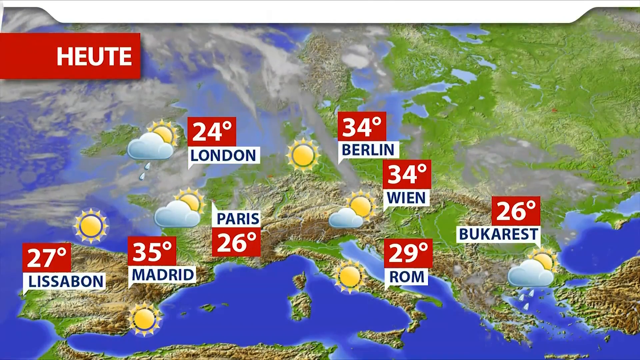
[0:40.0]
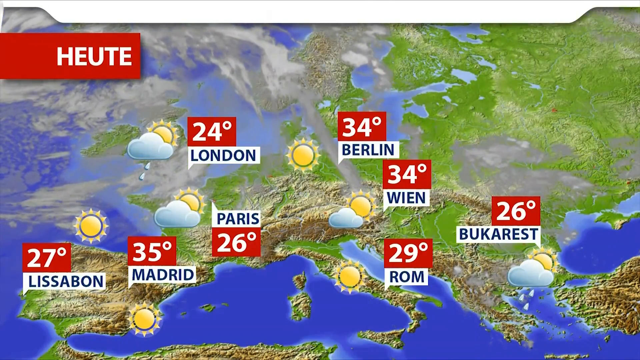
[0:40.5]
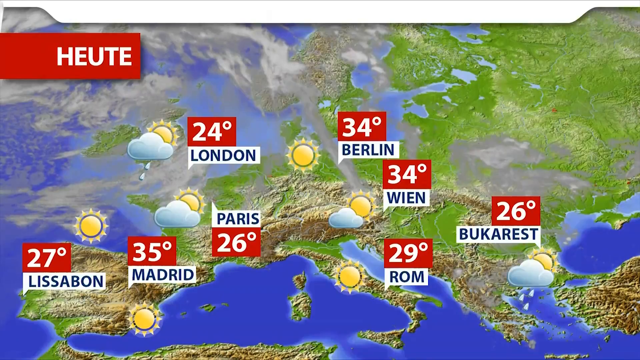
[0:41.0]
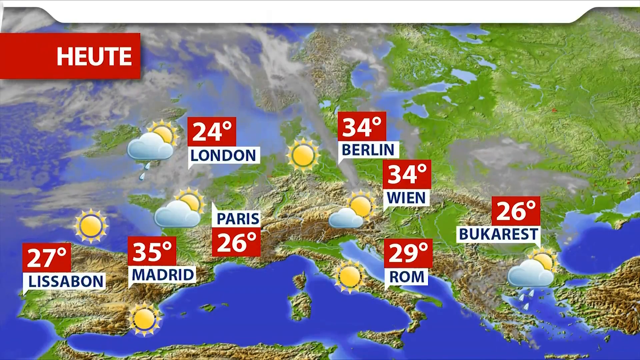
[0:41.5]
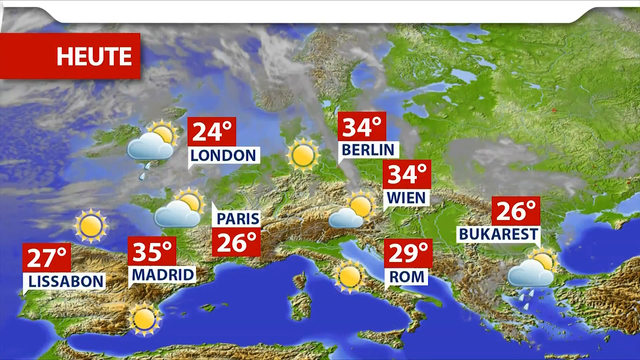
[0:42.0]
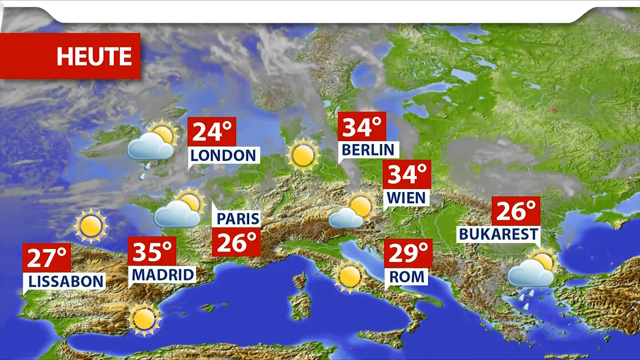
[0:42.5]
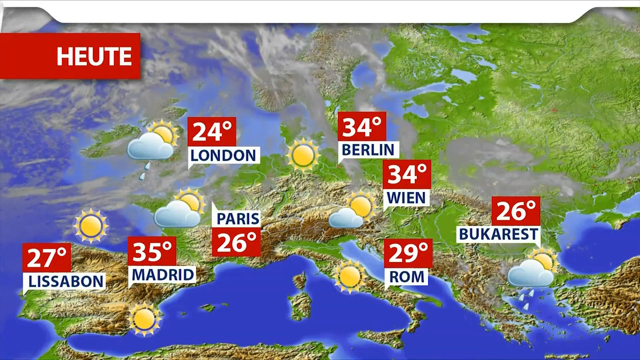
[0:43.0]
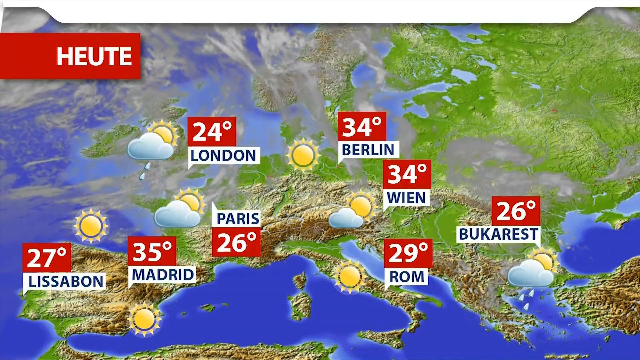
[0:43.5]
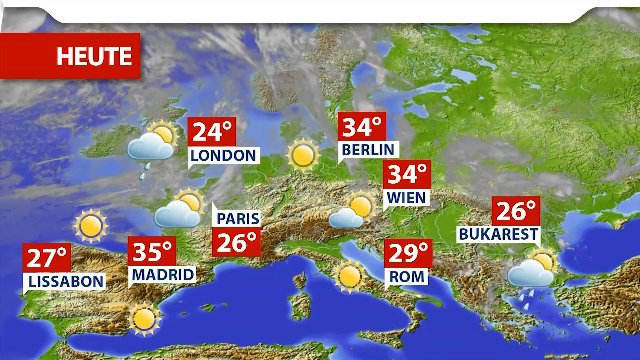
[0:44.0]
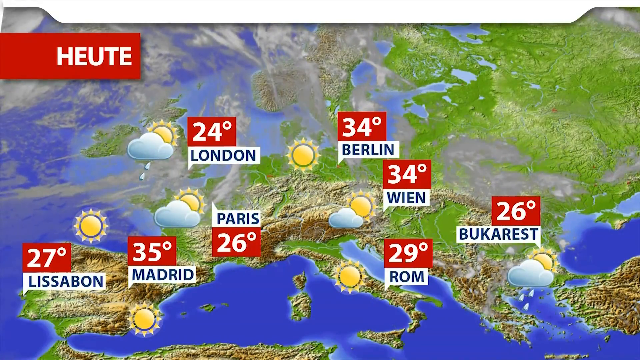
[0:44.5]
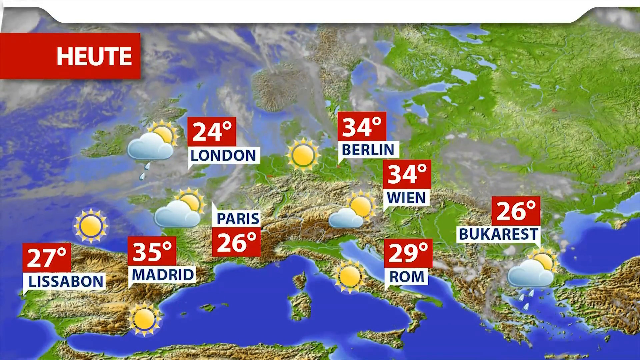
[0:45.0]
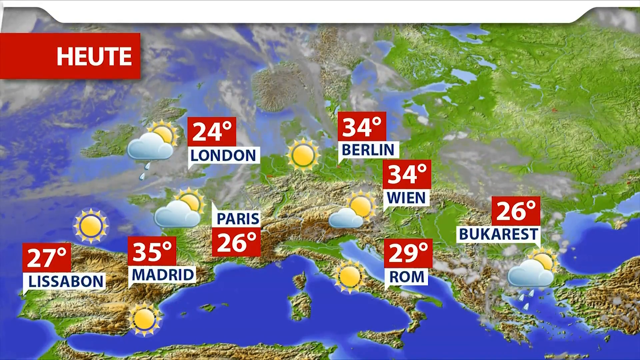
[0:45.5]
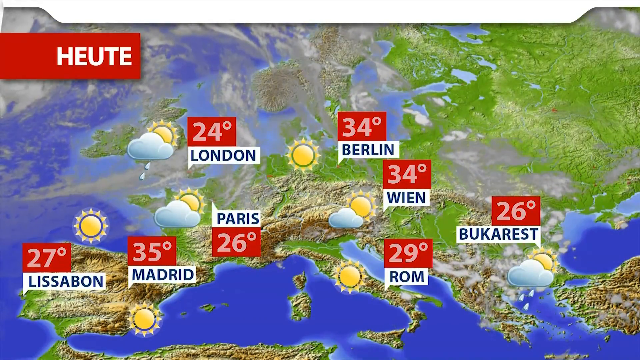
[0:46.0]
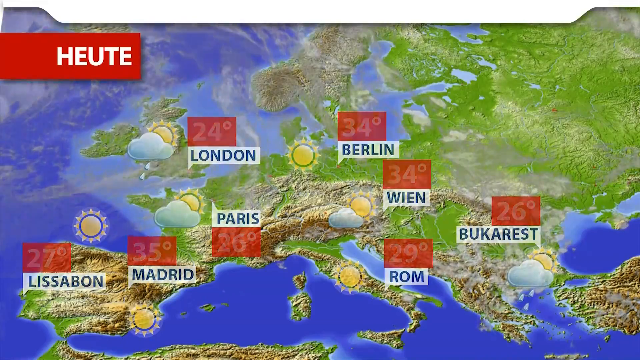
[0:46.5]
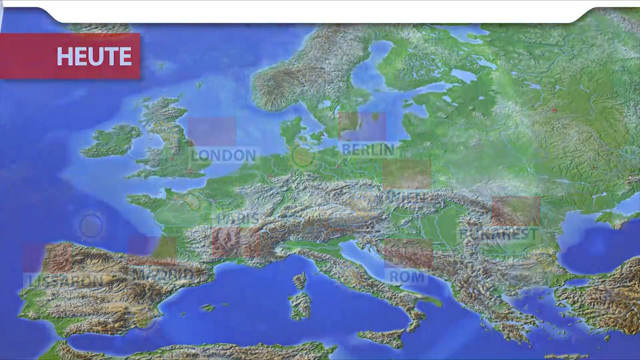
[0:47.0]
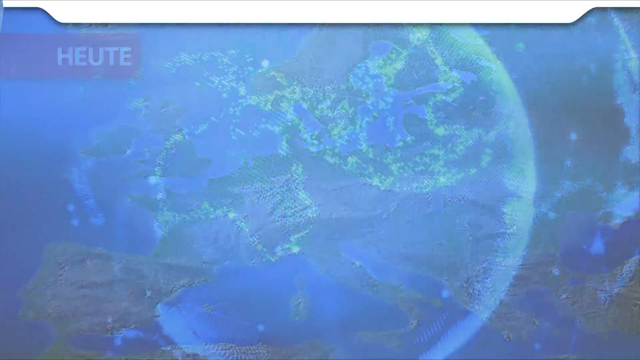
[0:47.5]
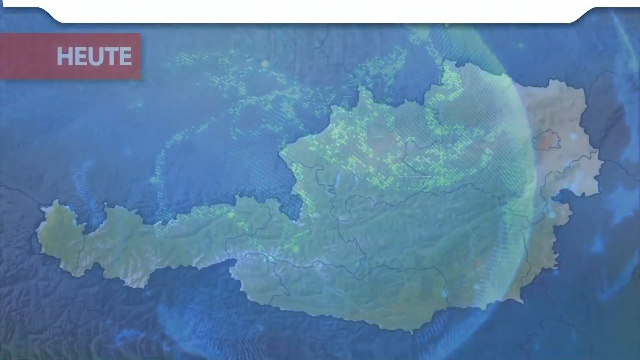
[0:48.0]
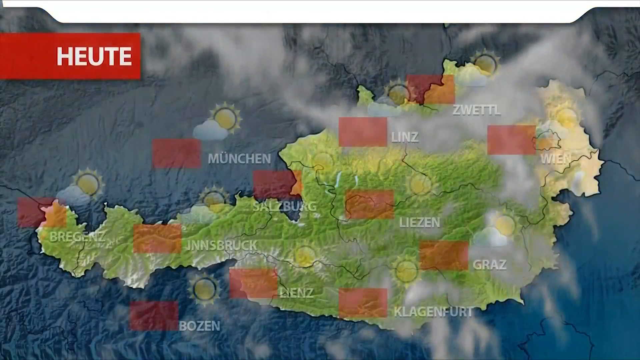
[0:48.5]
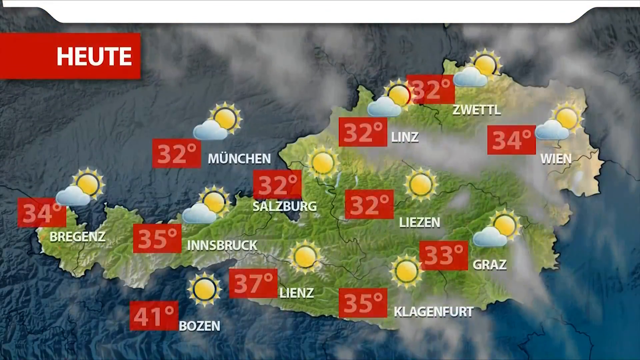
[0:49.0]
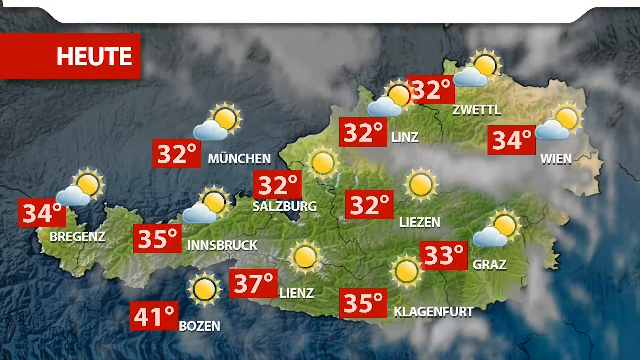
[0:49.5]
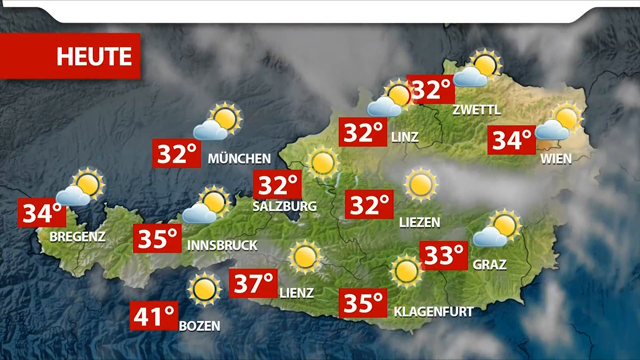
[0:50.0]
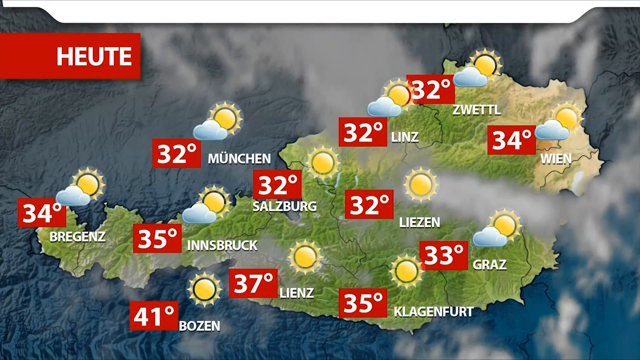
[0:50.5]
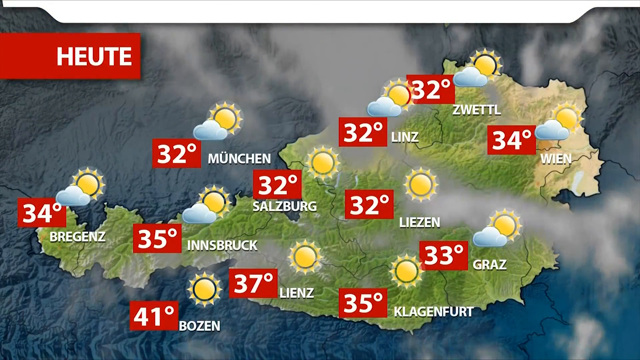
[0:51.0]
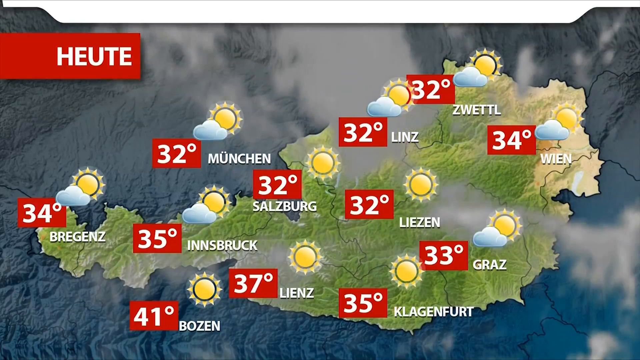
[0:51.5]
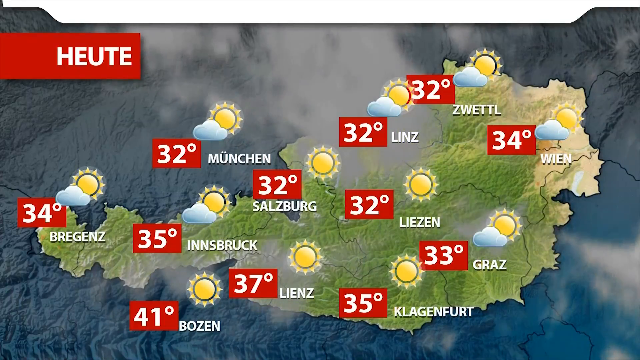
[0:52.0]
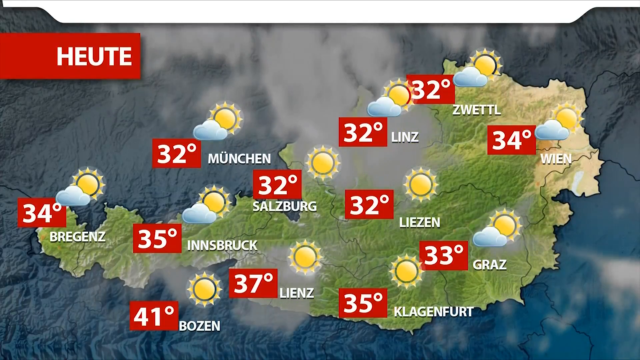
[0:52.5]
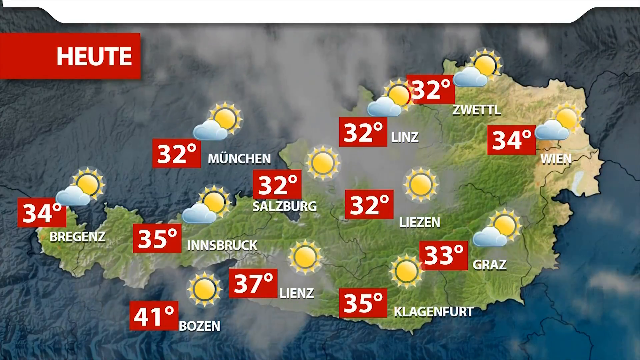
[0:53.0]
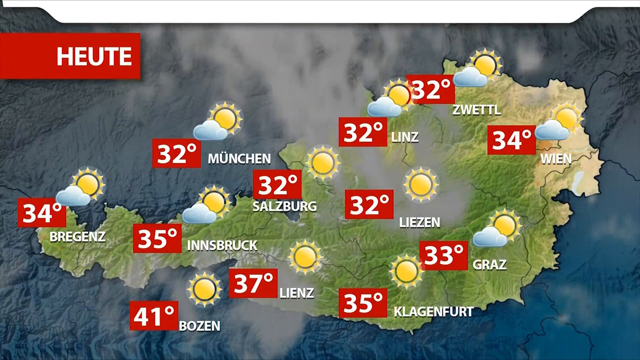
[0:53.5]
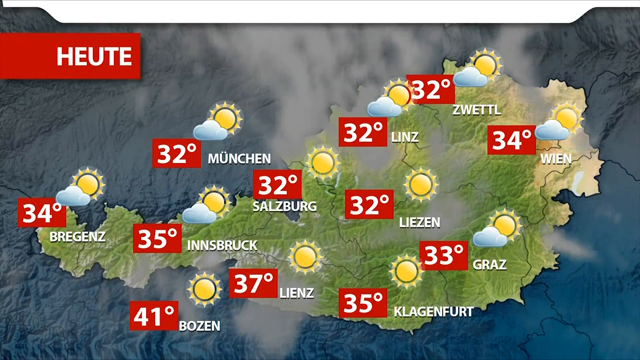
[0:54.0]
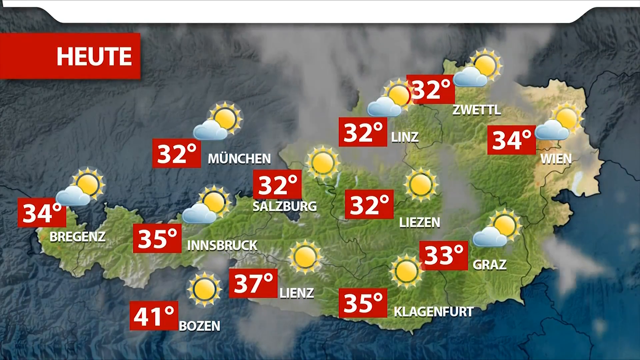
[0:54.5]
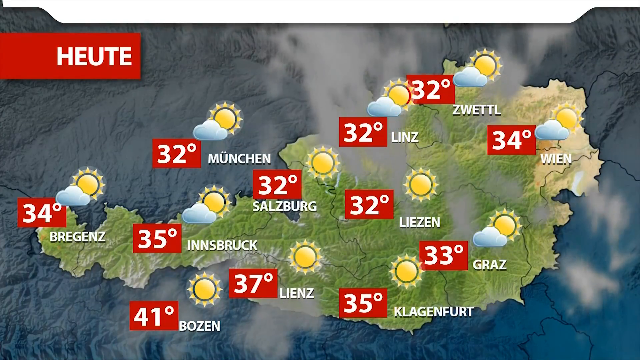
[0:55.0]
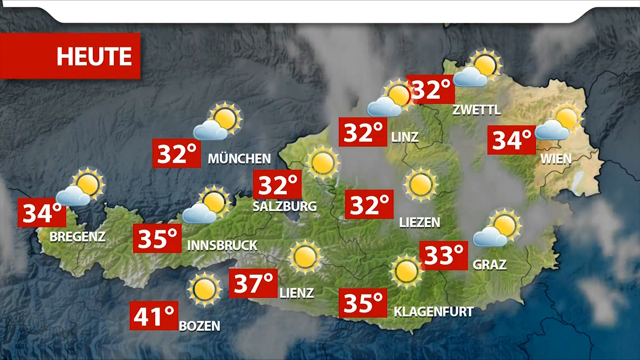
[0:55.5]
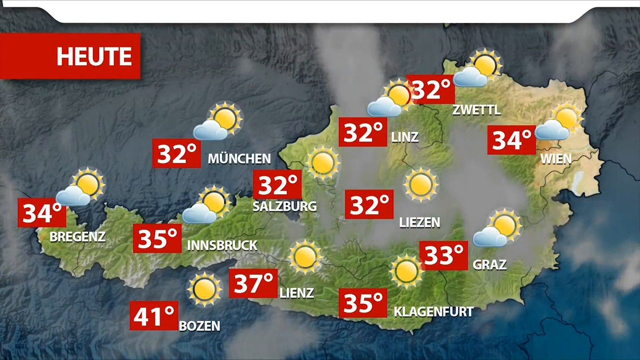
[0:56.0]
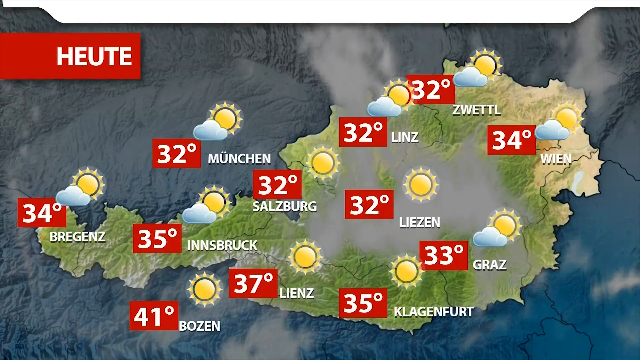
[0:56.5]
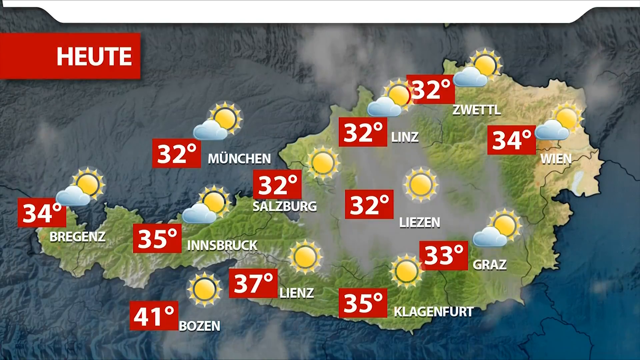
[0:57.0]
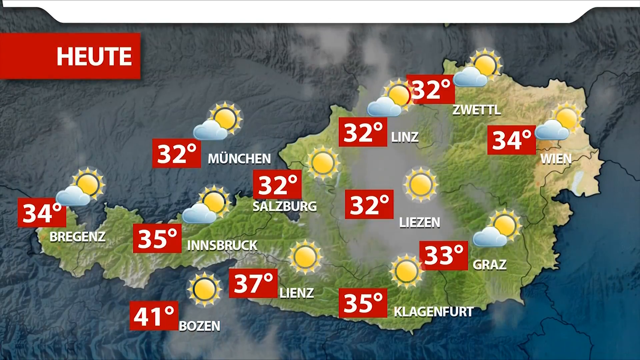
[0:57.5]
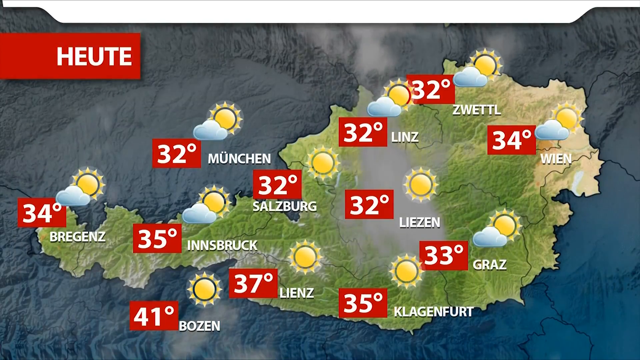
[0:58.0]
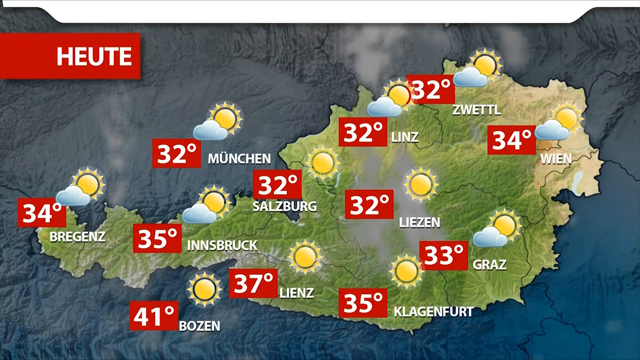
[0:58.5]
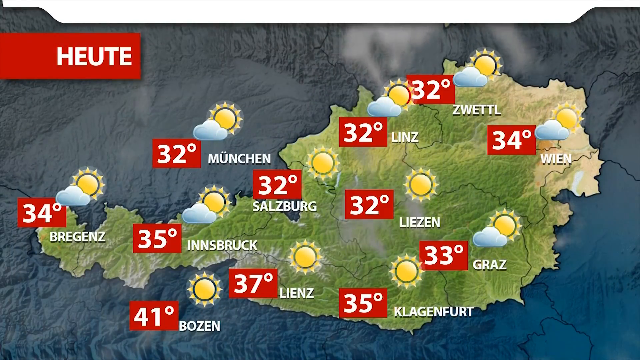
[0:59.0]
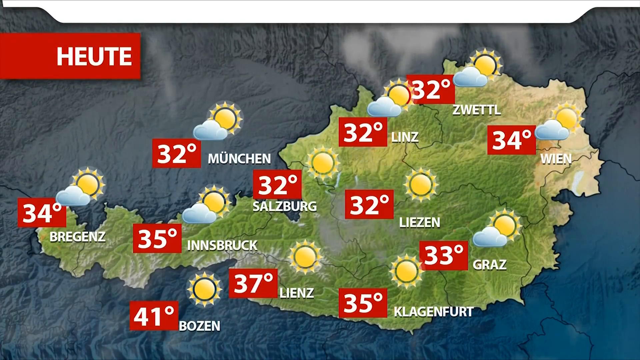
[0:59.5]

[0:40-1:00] A map shows specific areas with some water points and green patches, each place with its temperature: Bucharest 26 degrees, Wien 34, Berlin 34, Rome 29, Paris 26, London 24, Madrid 35 and Lisbon 27, apparently as part of a report on the weather in these areas. The setting then changes to another map highlighting a different set of areas with their temperatures, with less green colouring and waves moving around them. Places shown include Munich, Innsbruck and Bregenz.